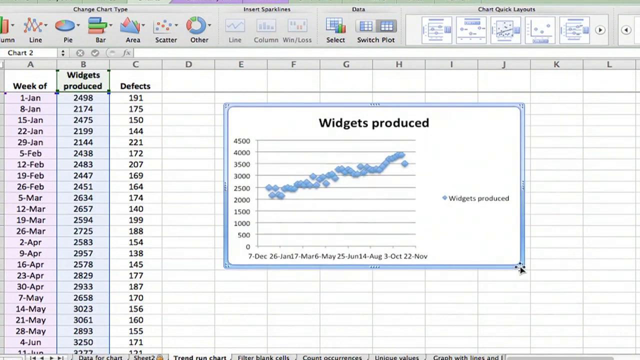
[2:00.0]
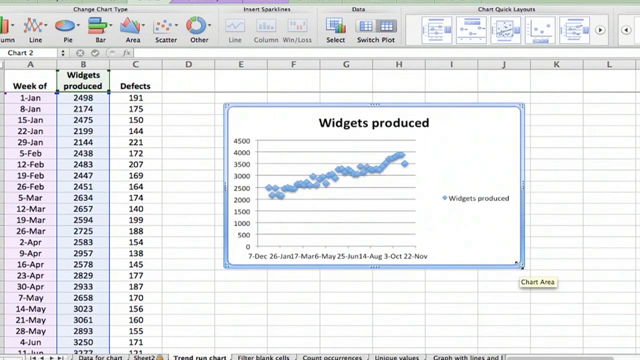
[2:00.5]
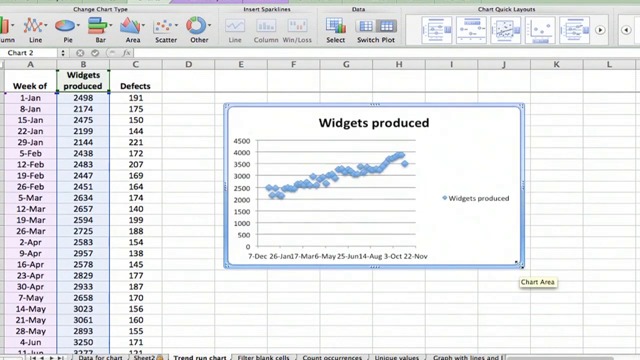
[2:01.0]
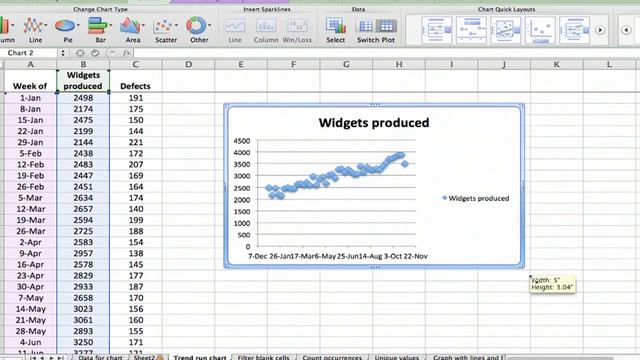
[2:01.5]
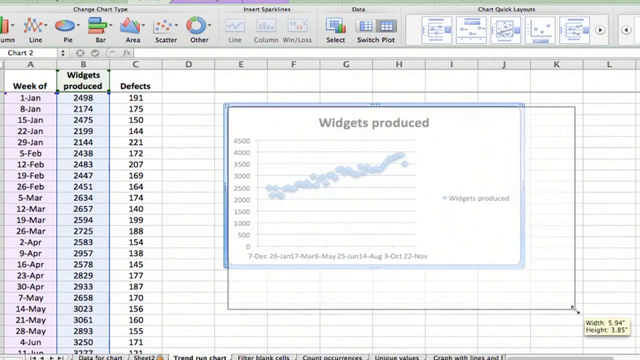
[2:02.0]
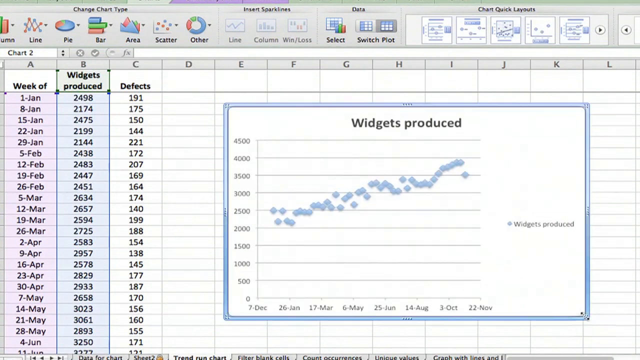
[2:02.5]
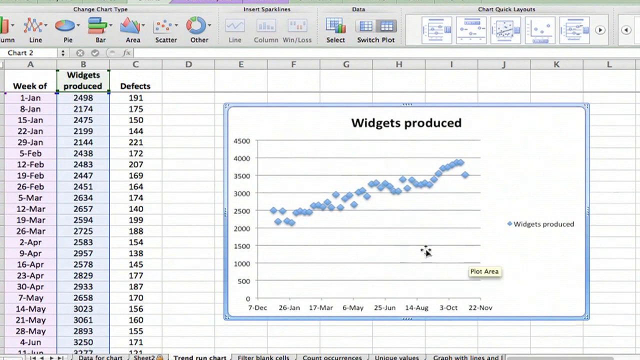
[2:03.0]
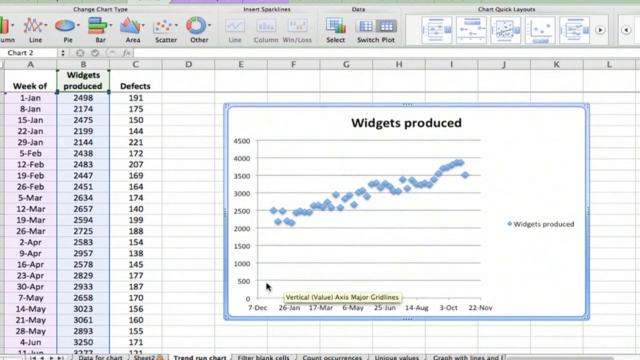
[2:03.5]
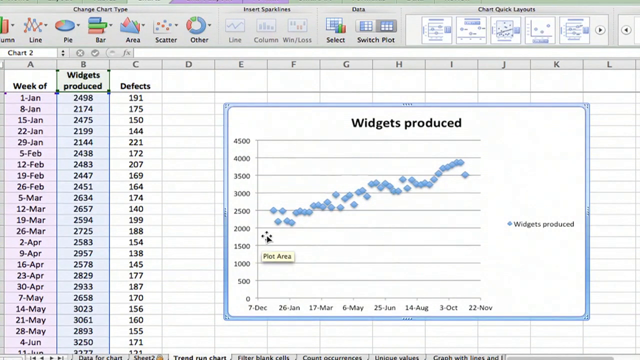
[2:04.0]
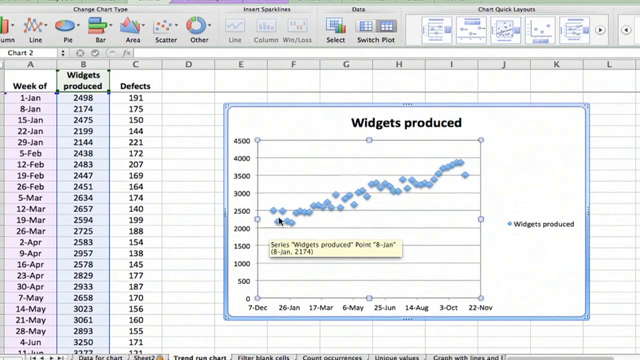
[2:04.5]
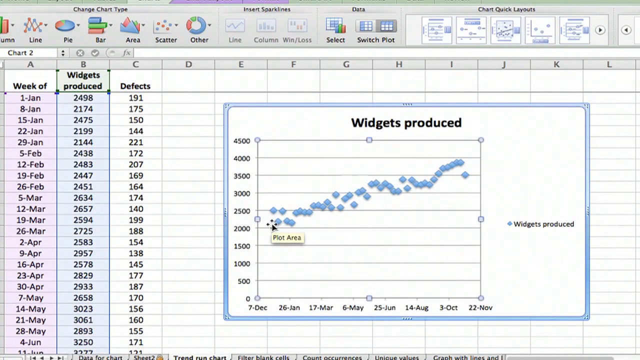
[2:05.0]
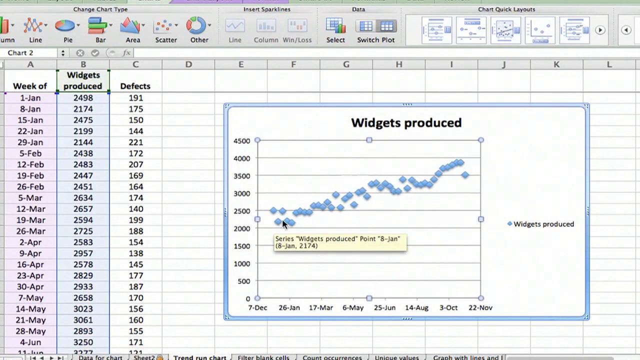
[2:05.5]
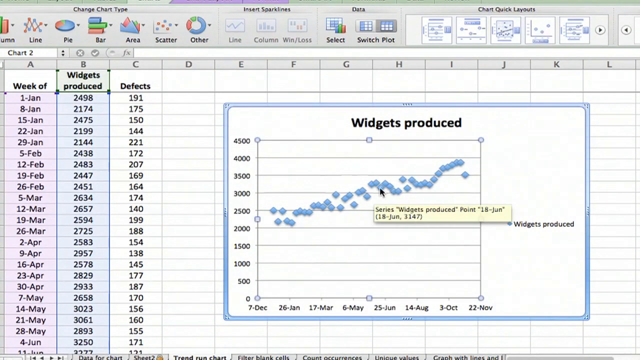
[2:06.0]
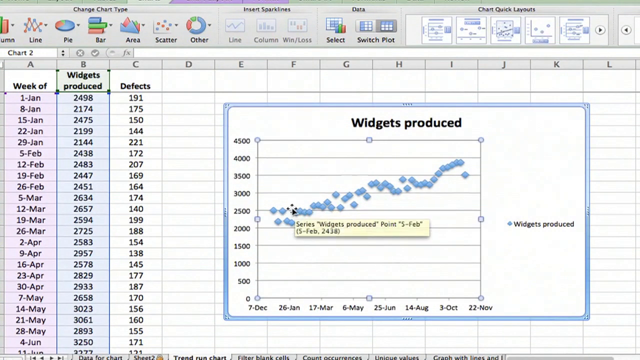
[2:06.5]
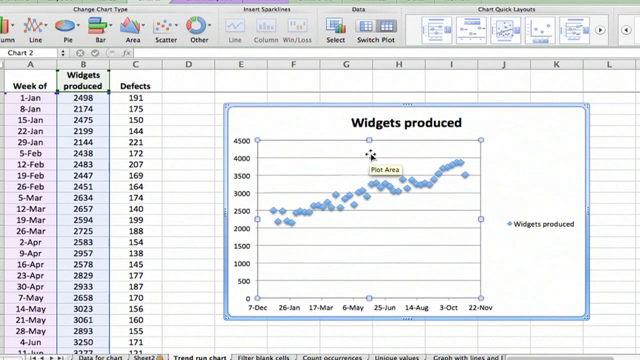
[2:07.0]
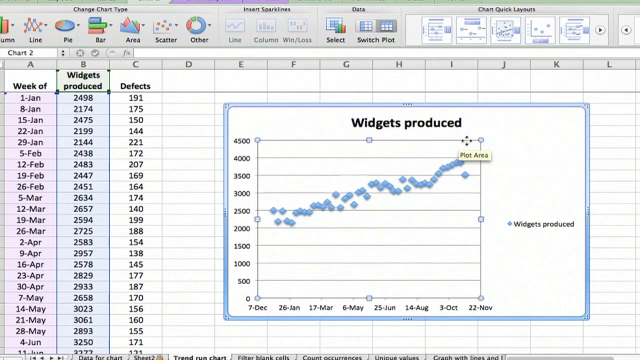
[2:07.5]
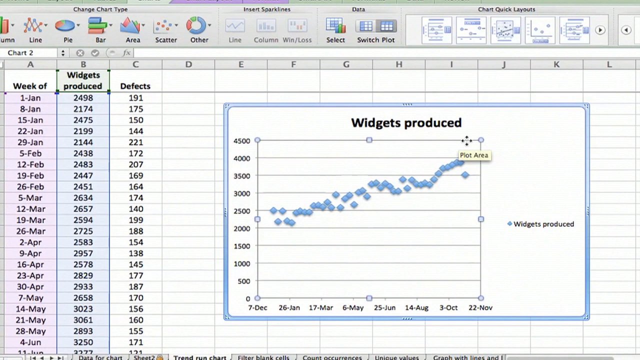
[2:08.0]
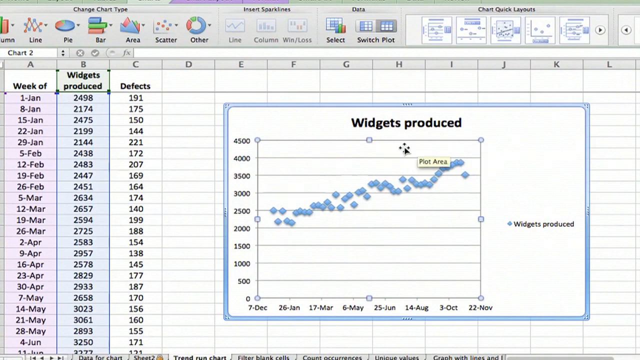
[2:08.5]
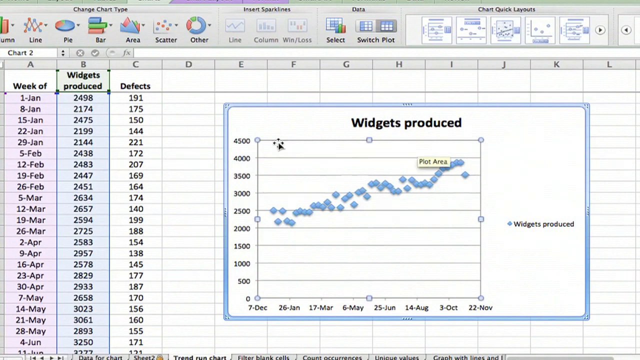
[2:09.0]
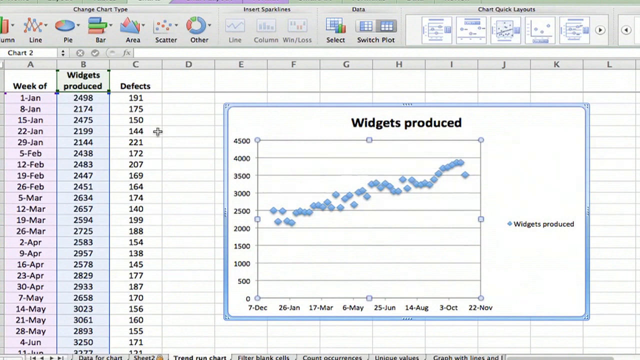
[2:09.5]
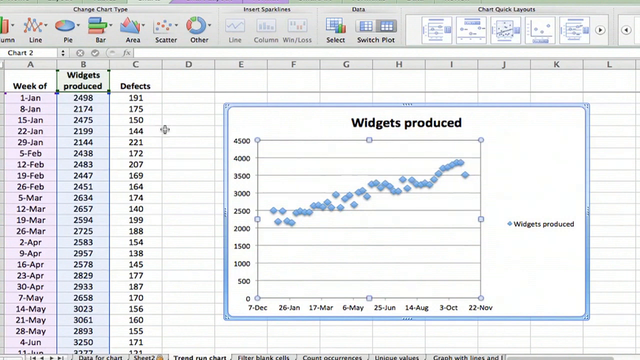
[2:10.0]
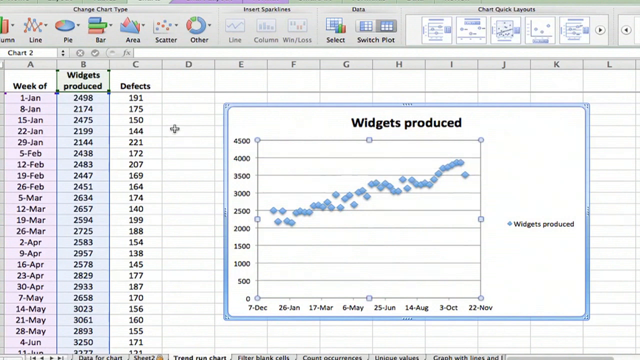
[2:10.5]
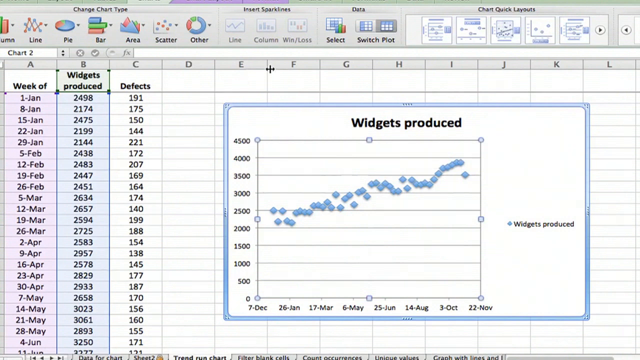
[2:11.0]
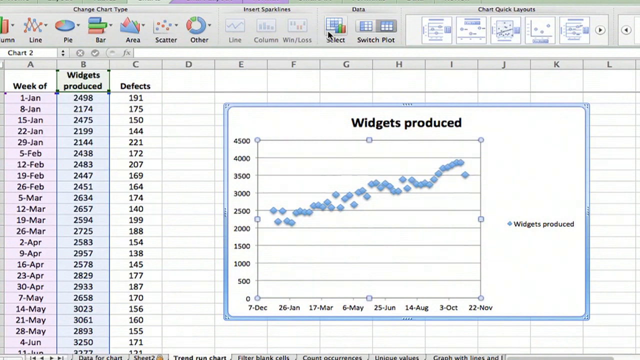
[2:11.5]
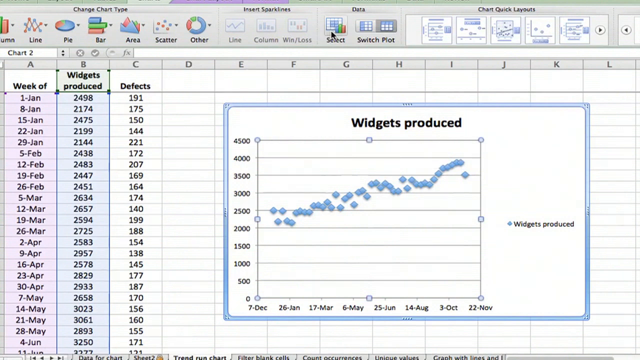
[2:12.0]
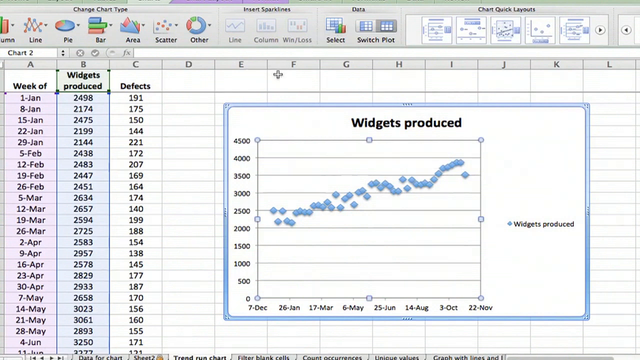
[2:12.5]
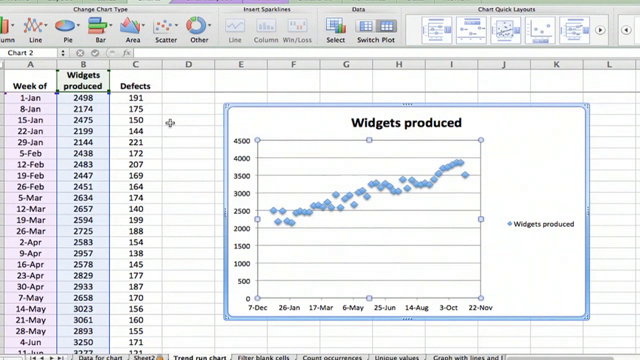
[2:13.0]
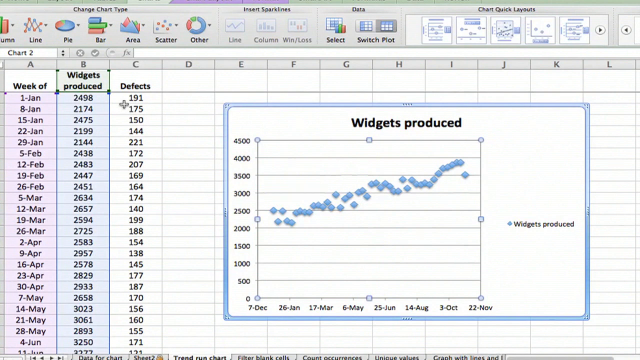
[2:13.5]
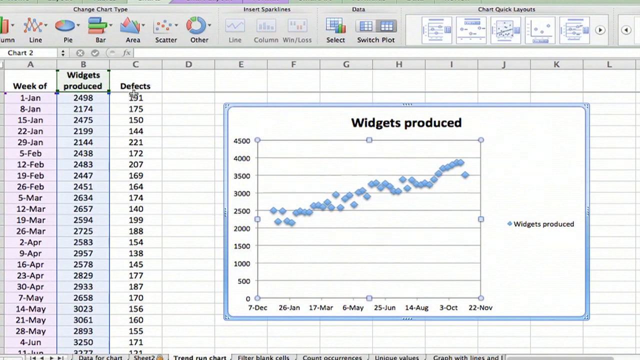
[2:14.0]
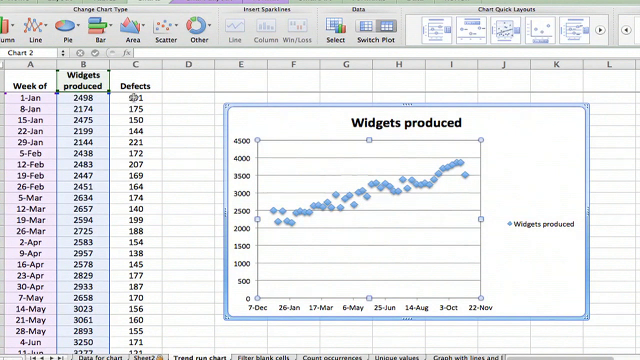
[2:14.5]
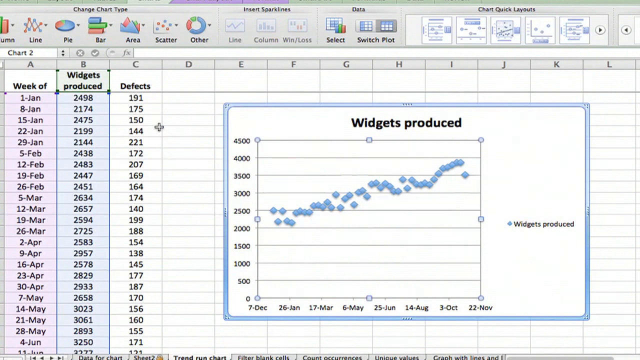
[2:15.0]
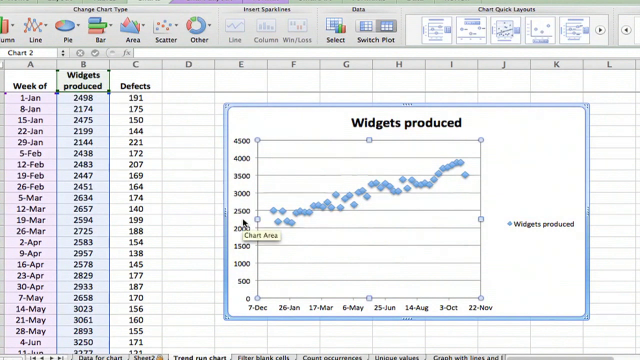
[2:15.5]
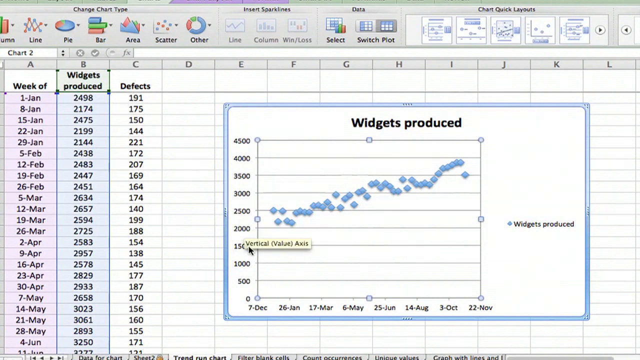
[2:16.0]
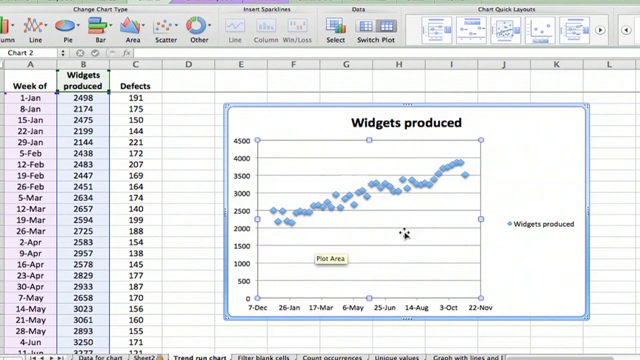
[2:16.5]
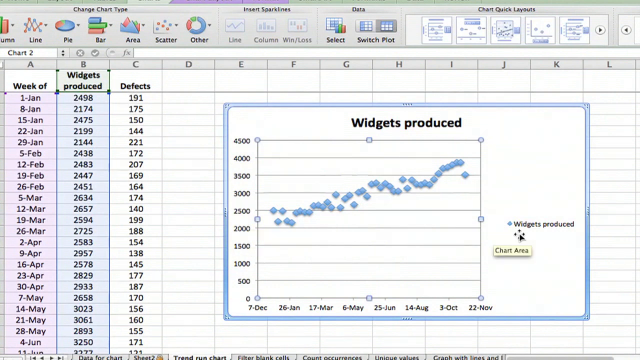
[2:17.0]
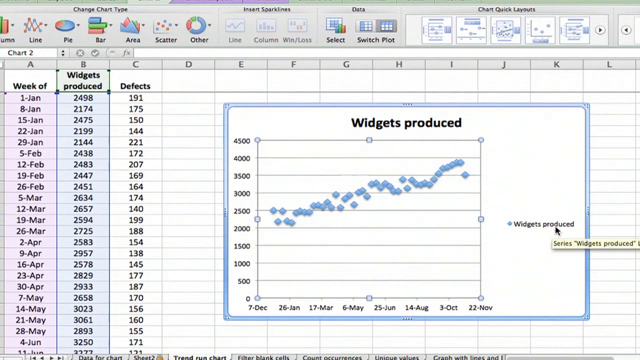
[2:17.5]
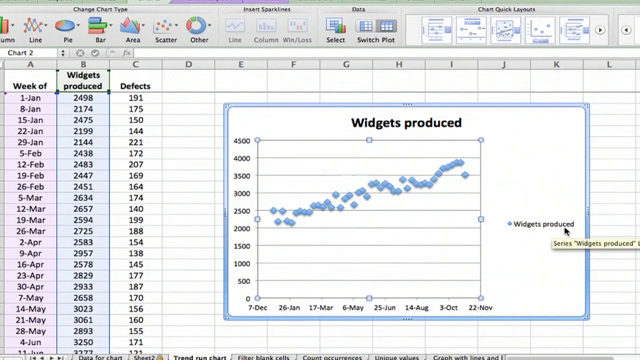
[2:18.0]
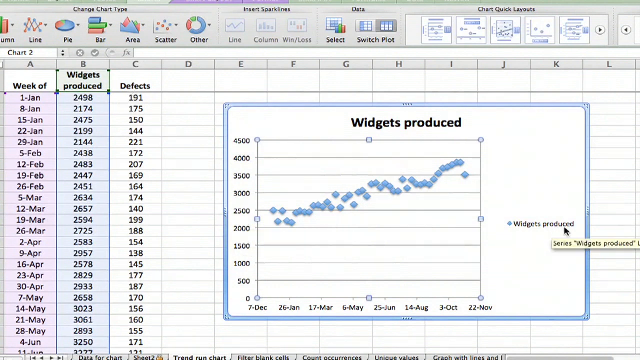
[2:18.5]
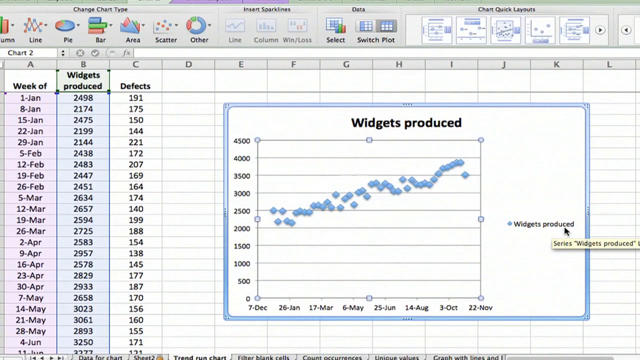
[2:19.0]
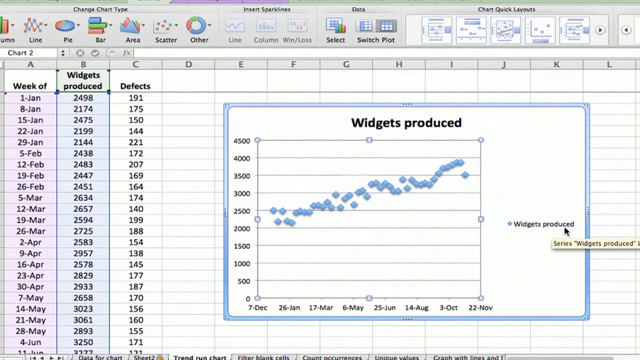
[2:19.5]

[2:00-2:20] An Excel document with three columns of data, Week of, Widgets Produced and Defects, is shown as the user selects and resizes a chart named Widgets Produced, which records data from columns A and B. The user selects the lower right corner of the chart and expands it to fill more of the empty space in the document, then the chart returns to its smaller size. The columns used for the chart are highlighted: Week of in light purple and Widgets Produced in light blue. The fill is either a highlight or transparent.